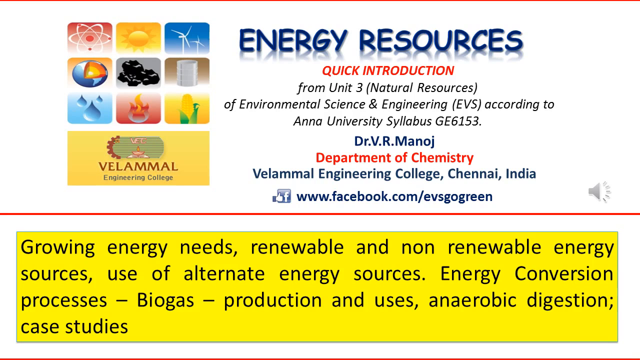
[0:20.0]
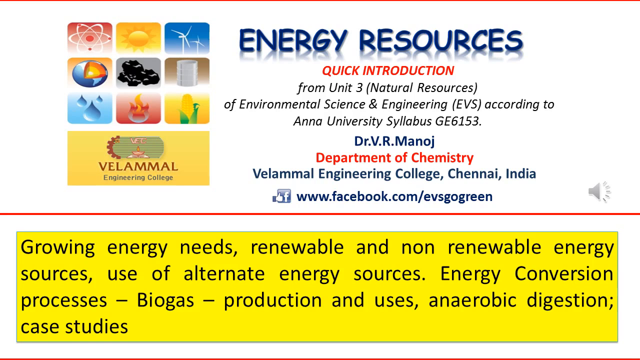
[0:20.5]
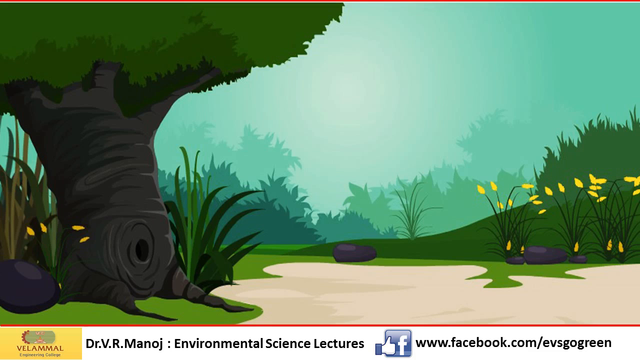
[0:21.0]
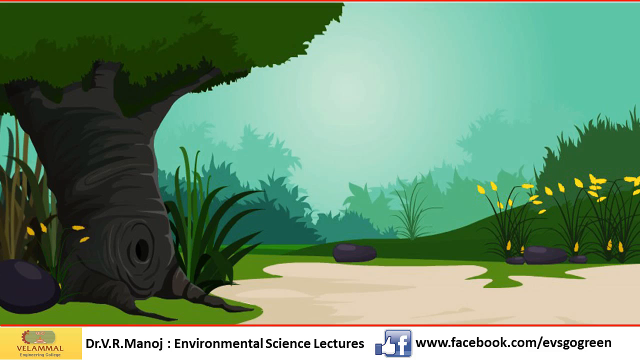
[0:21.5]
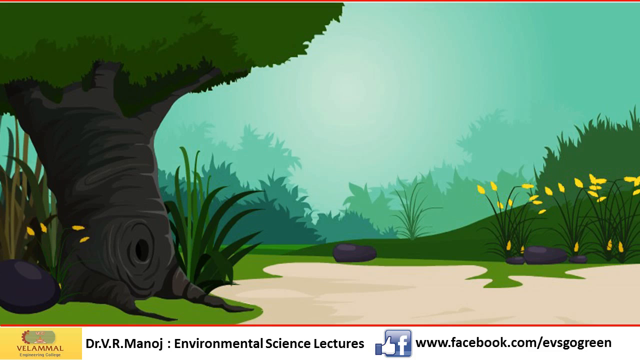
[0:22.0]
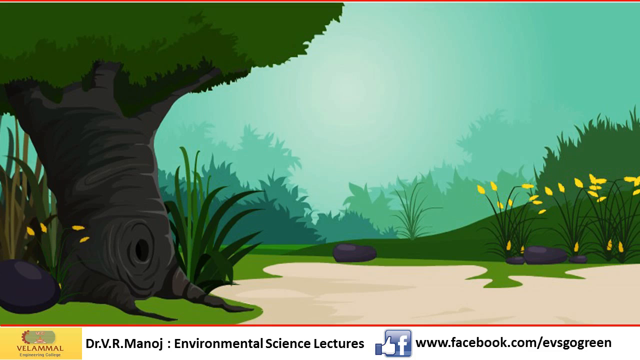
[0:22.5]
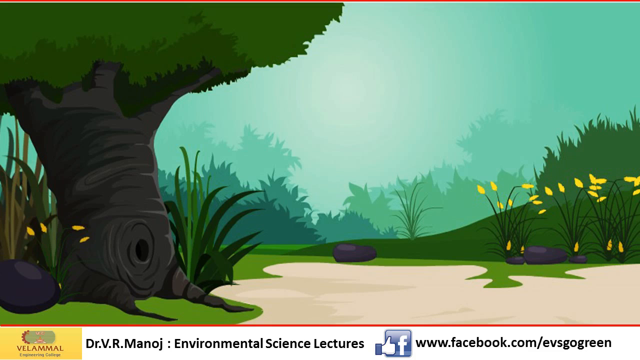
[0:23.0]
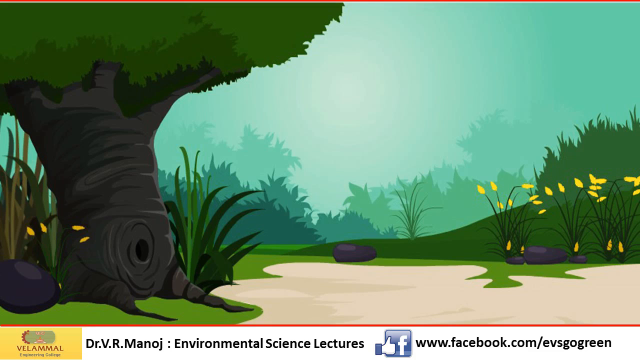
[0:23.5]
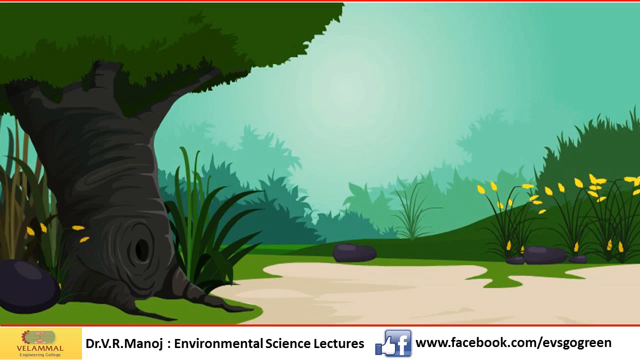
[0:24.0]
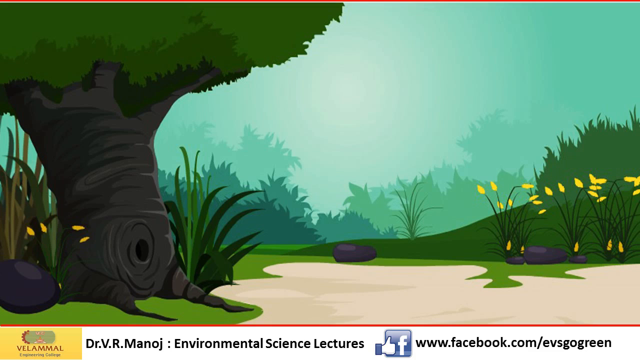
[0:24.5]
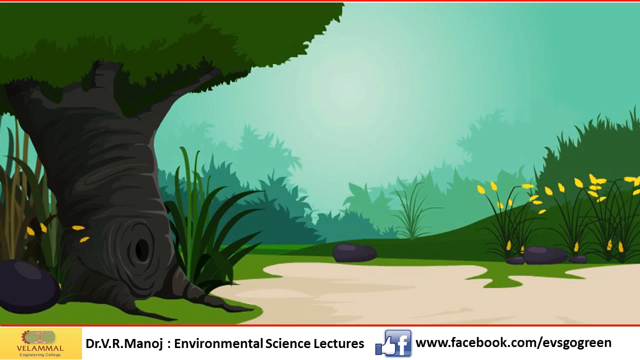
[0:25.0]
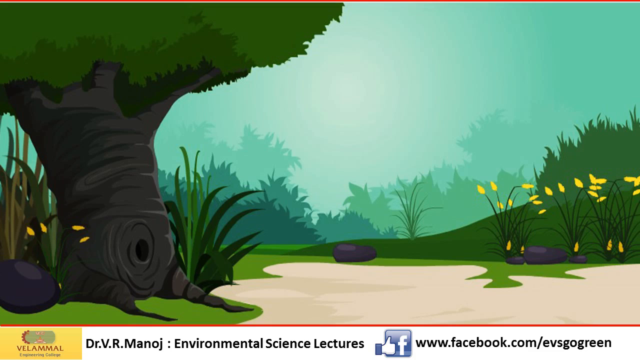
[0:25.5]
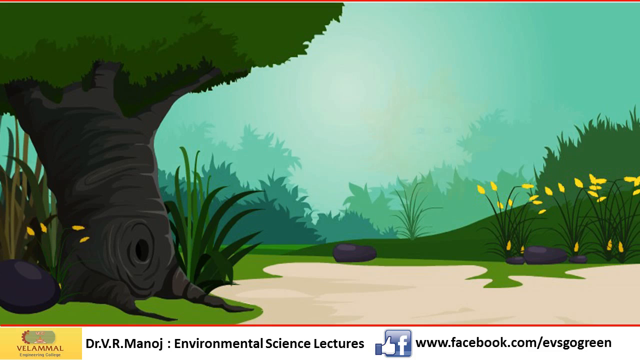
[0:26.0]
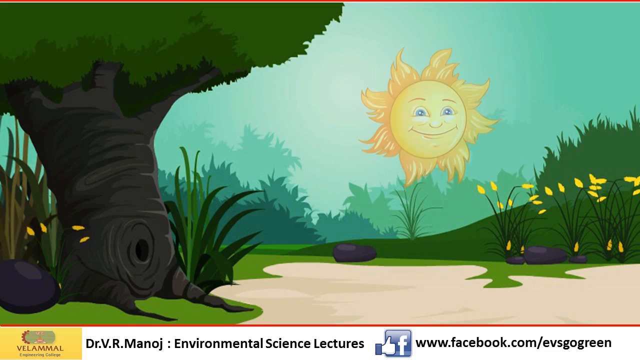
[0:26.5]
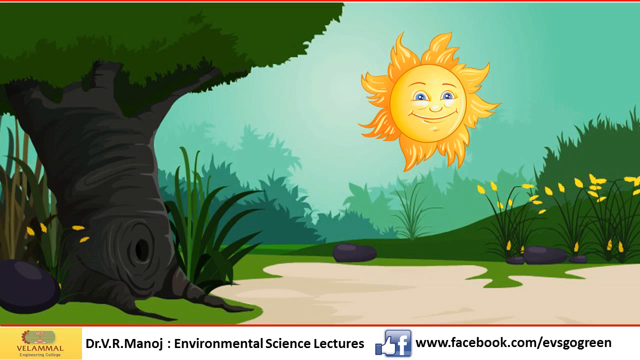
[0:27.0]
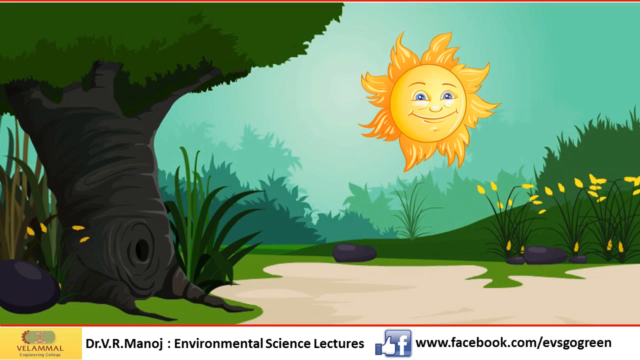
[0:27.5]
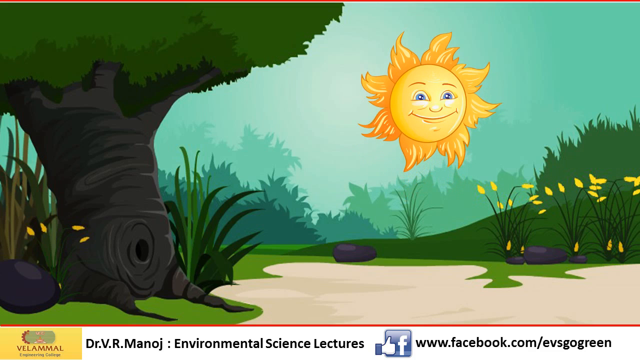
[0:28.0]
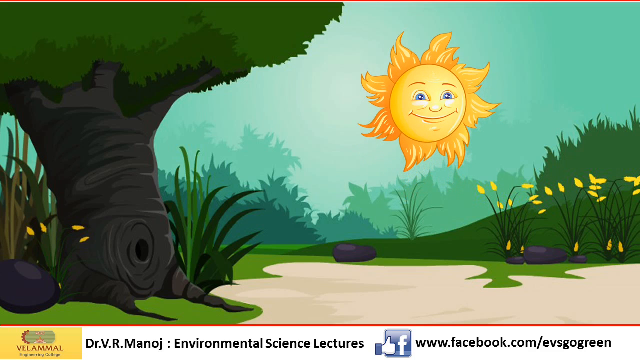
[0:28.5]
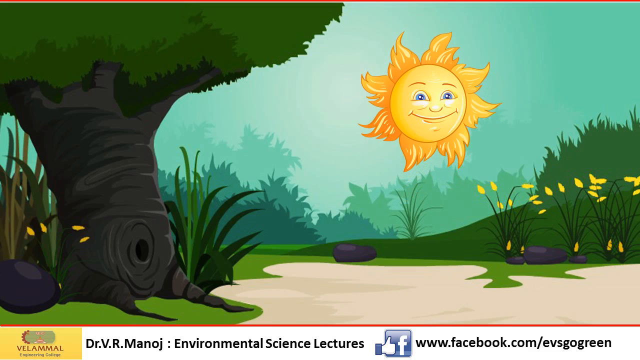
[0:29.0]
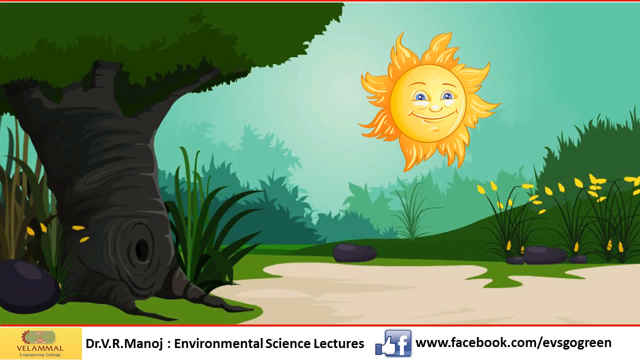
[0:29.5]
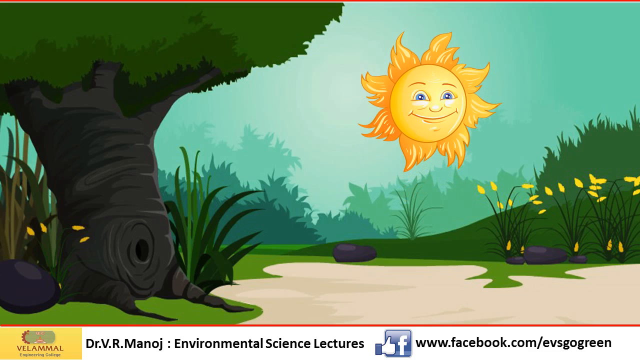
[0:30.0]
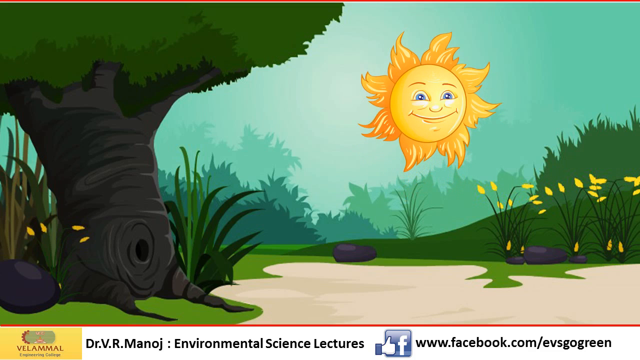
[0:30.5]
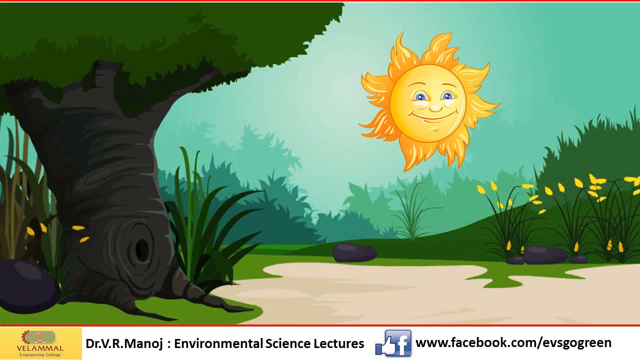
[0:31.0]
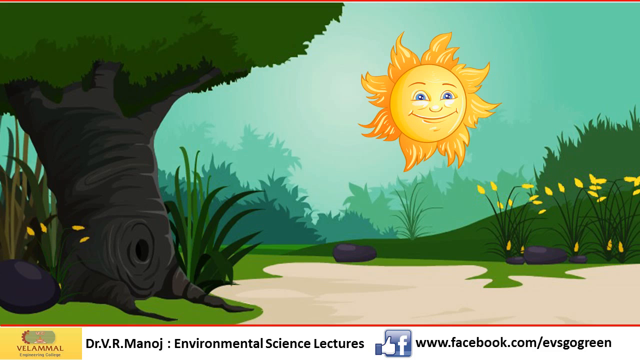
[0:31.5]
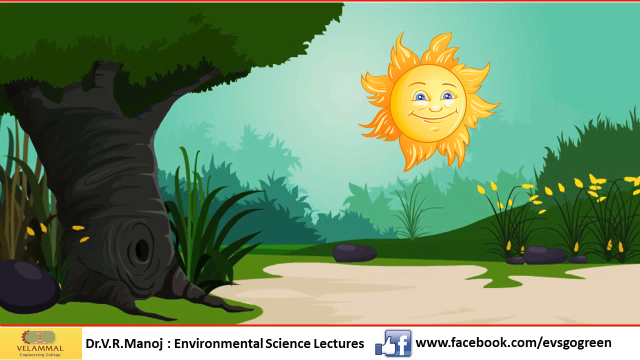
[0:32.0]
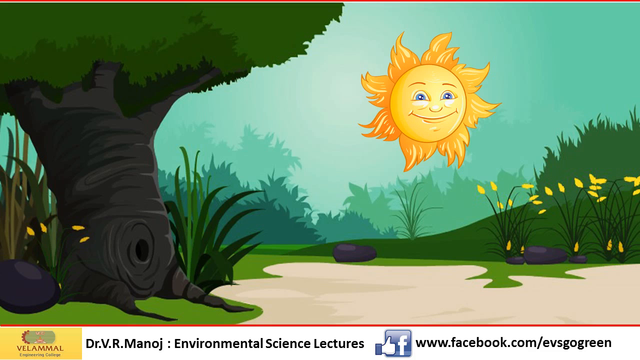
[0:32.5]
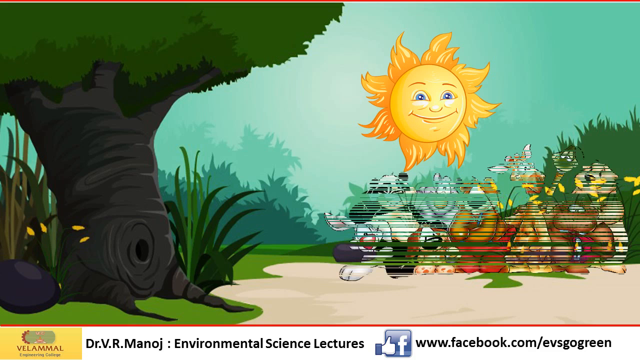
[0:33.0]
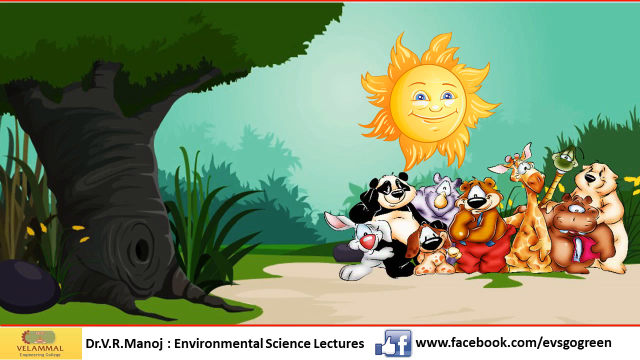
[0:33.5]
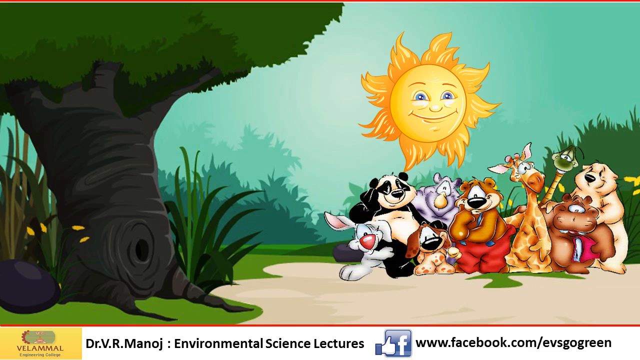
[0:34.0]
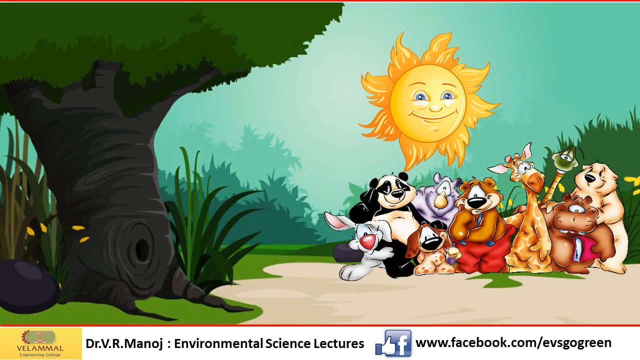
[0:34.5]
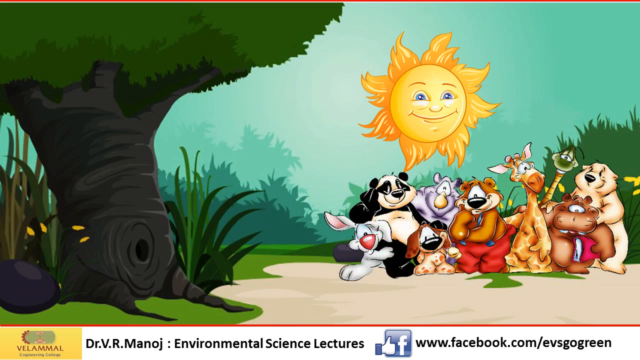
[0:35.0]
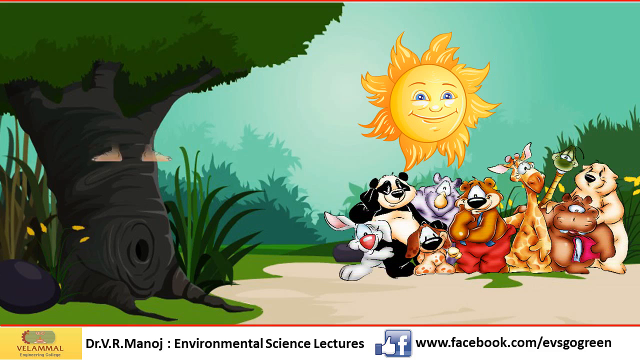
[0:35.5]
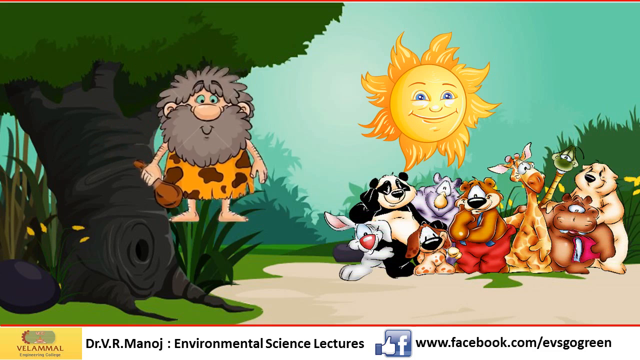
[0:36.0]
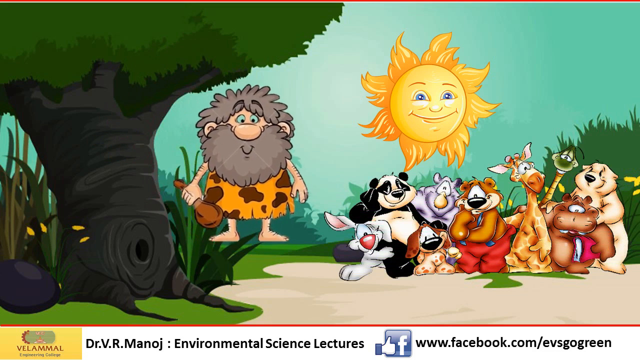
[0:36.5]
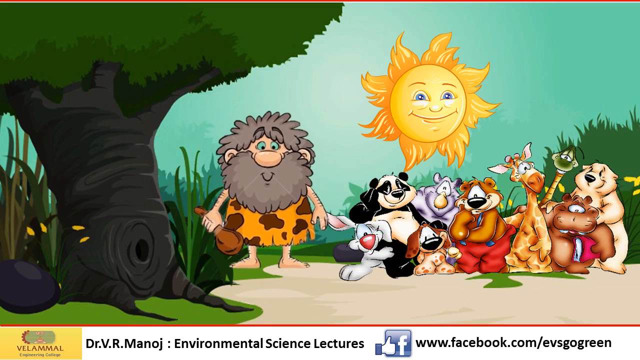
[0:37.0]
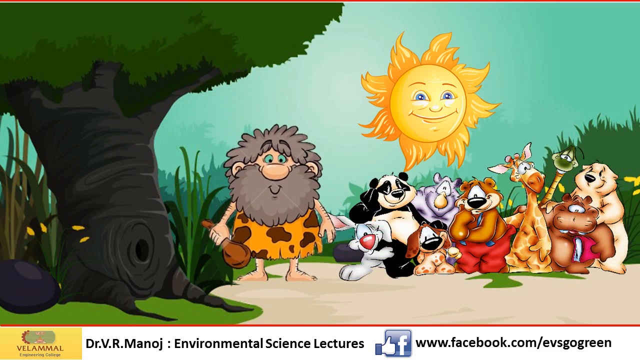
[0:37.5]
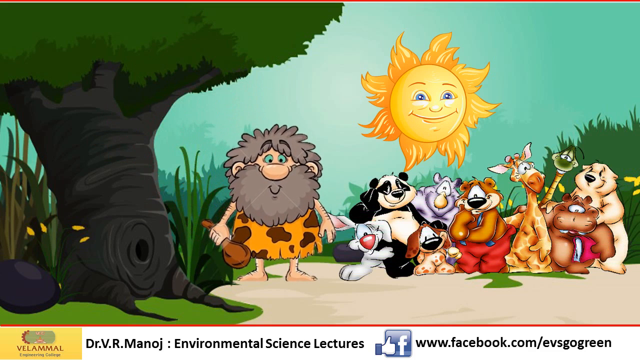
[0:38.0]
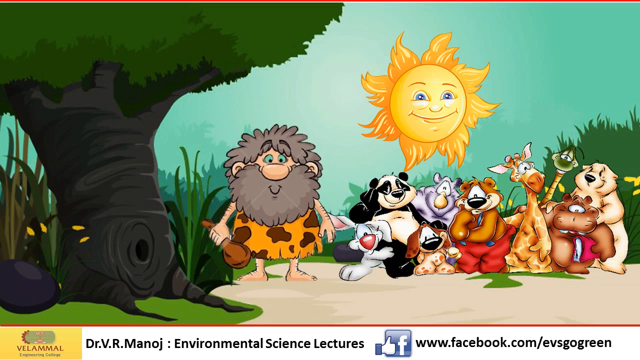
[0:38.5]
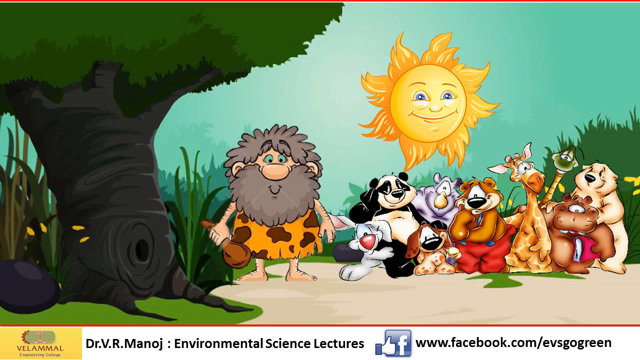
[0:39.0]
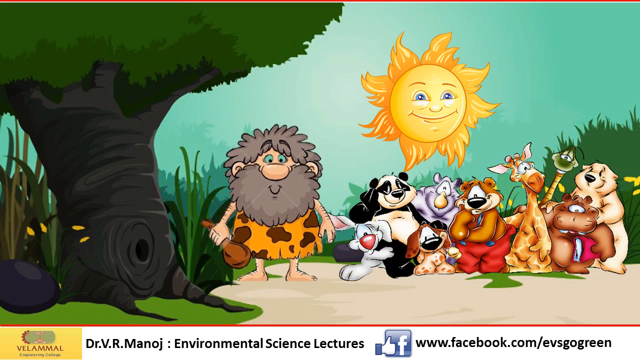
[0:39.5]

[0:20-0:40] The screen shows a class taught by Dr. B. R. Manoj. Below his name, in red text, it reads "Department of Chemistry, Balammal Engineering College", with the city given as Chennai, India. Below that is "www.facebook.com/EVS go green". In the upper left is an illustration for Balammal Engineering College and its logo in yellow, red and green. The class is Energy Resources, a quick introduction, and the bottom of the page lists energy needs and renewable and non-renewable energy sources. The video then switches to an illustration of a green area: a large tree on the left, a number of trees in the background, all in shades of green, and some small yellow flowering plants on the right. The sky is more green than blue, with bits of white. A smiling cartoon-like sun rises, with almost flower-like petals around it representing the sun's rays.